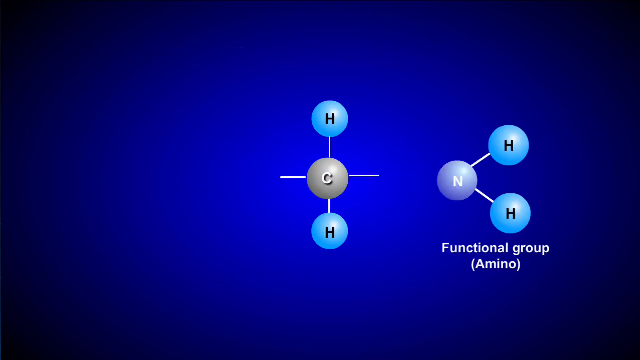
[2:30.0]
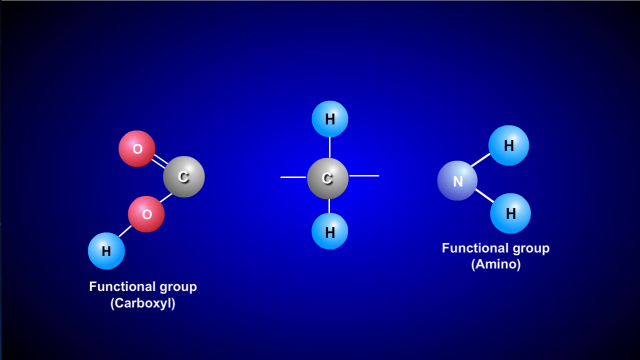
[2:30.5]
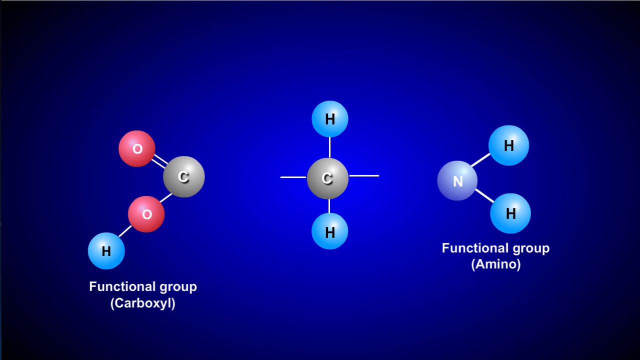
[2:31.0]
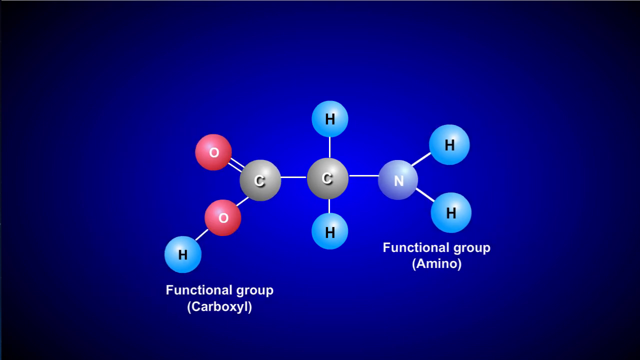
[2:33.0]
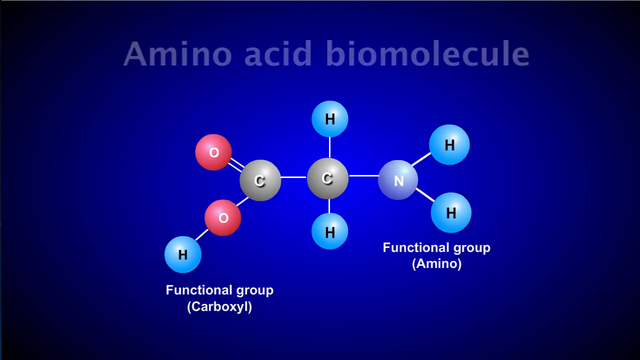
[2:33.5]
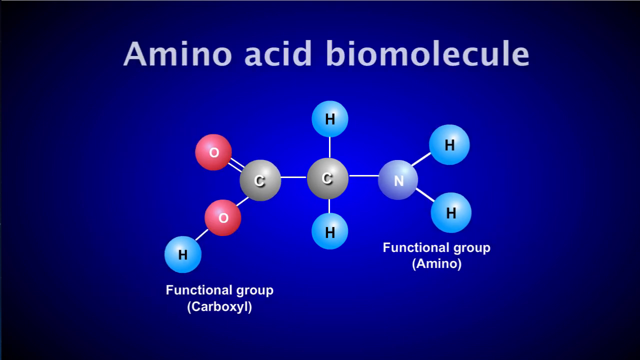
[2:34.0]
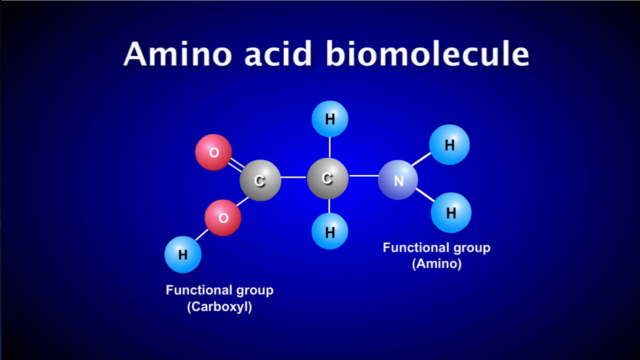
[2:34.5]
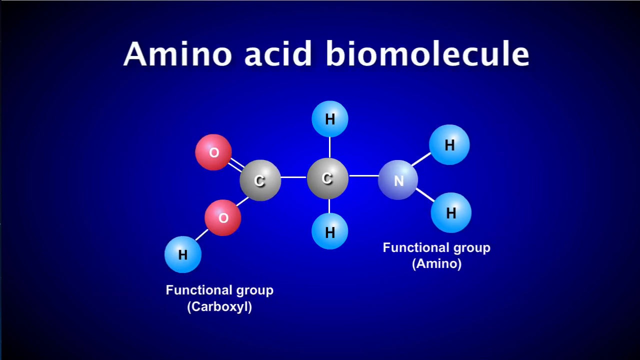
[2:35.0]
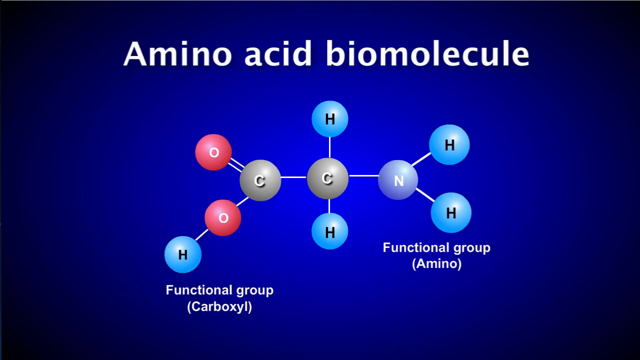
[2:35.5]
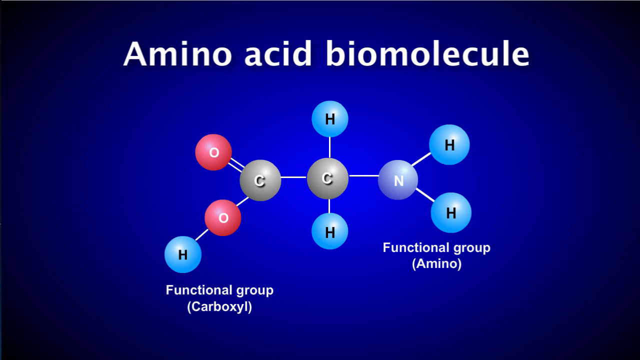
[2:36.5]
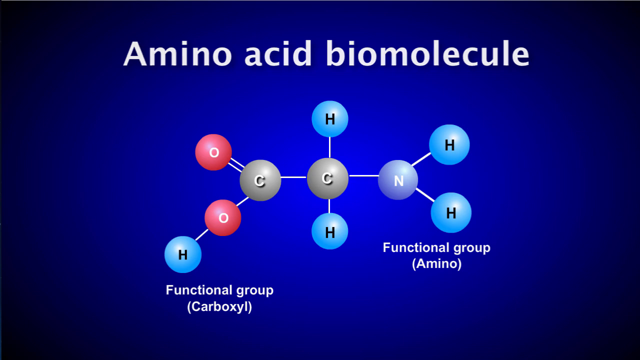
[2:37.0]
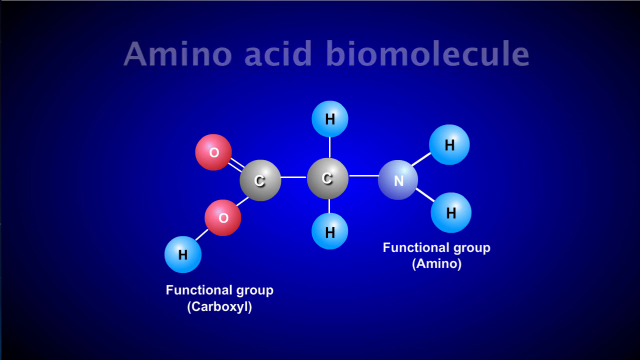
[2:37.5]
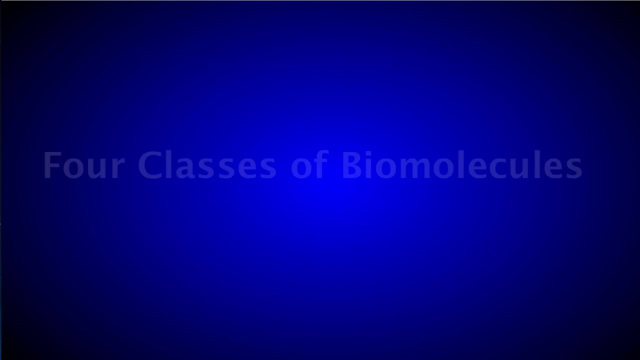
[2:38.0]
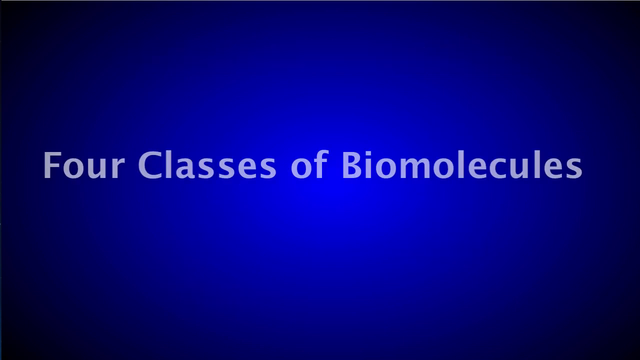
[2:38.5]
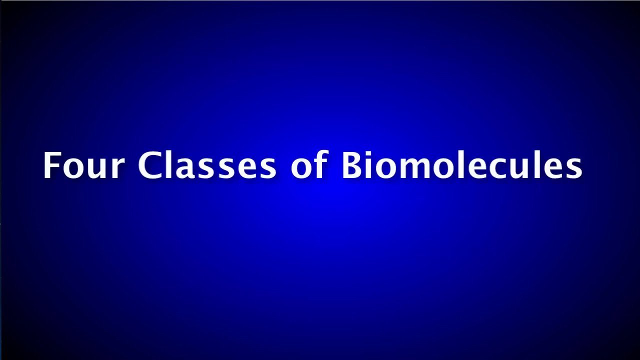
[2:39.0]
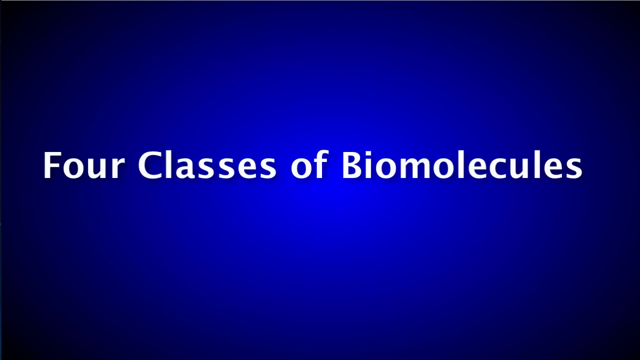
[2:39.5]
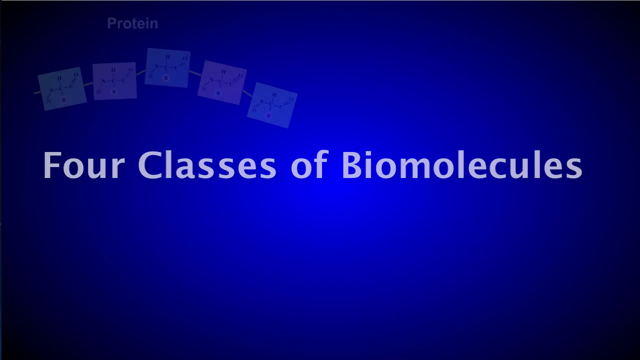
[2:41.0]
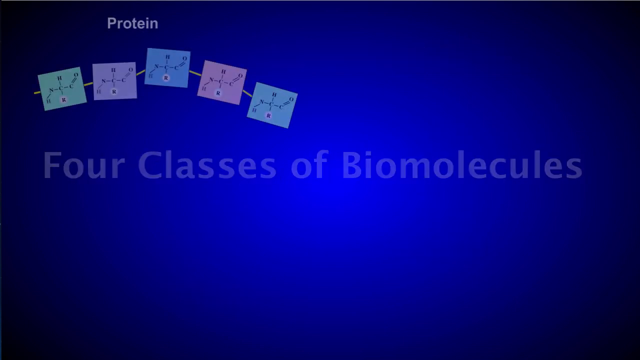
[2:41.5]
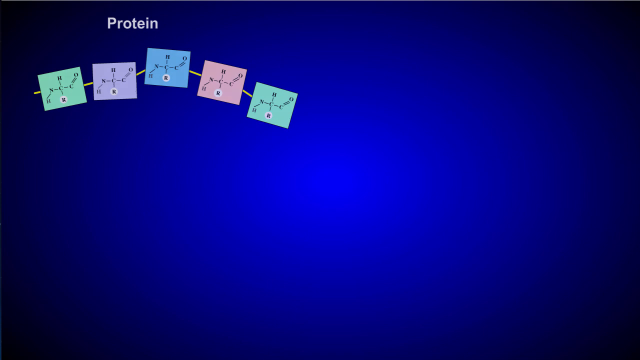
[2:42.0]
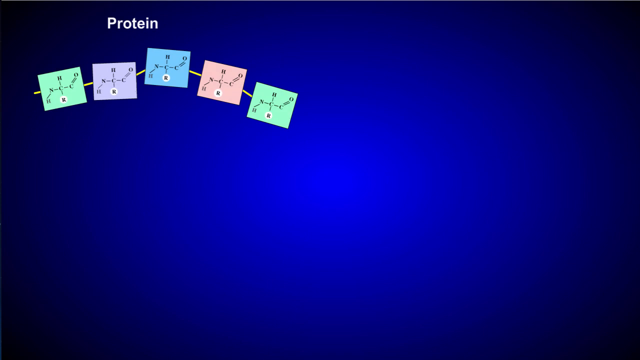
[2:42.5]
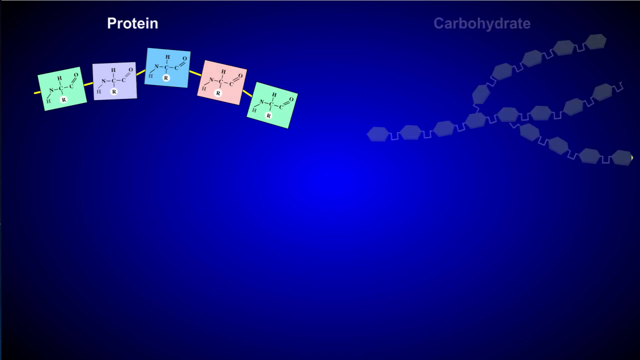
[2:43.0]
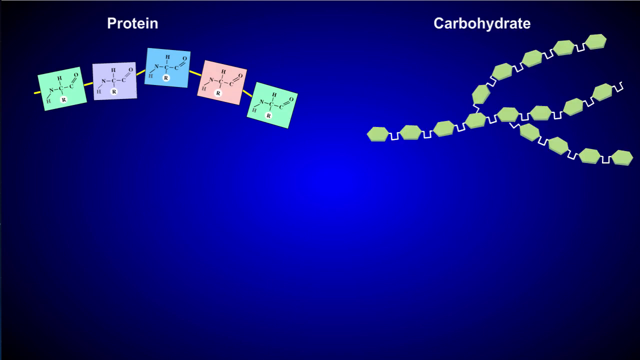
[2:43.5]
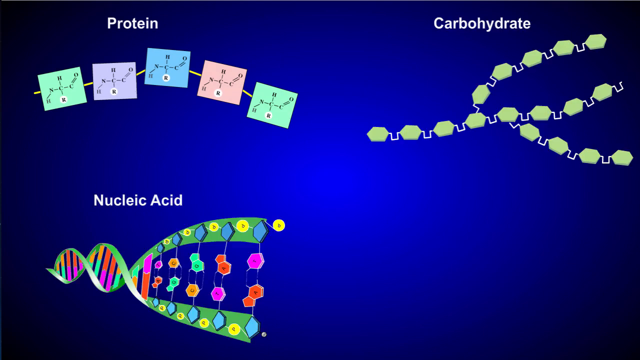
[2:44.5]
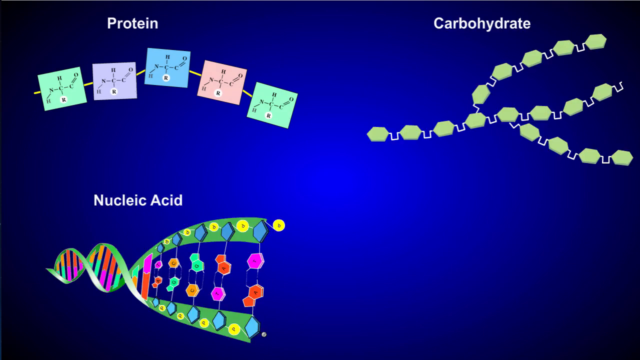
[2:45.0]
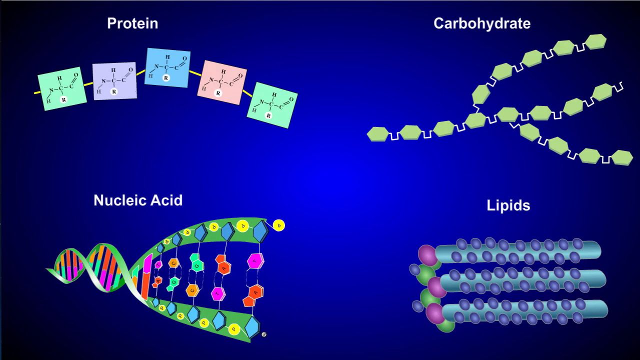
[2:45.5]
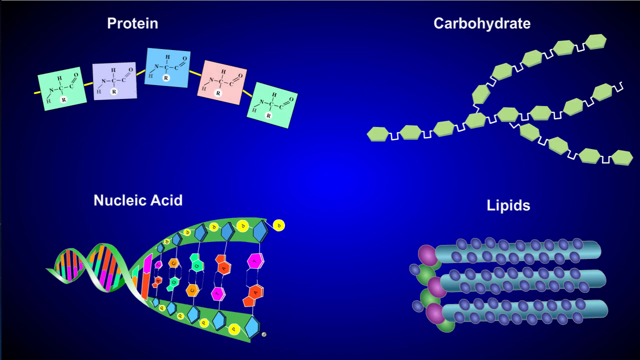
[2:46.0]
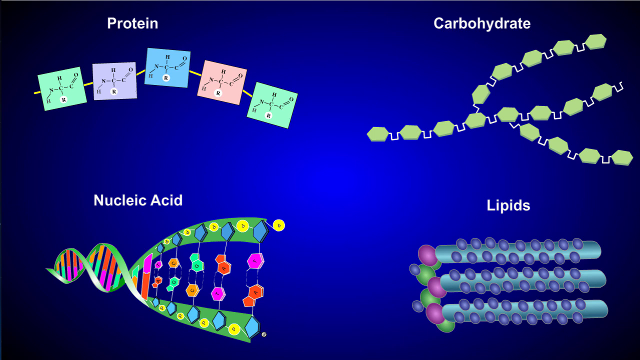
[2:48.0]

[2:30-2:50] A functional carboxyl group and an amino group interact with what appears to be another molecule. Text reads "four classes of biomolecules": proteins, carbohydrates, nucleic acids and lipids. The molecules interact so that a new molecule is formed.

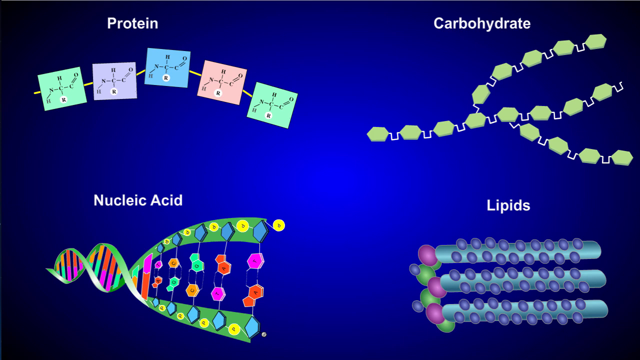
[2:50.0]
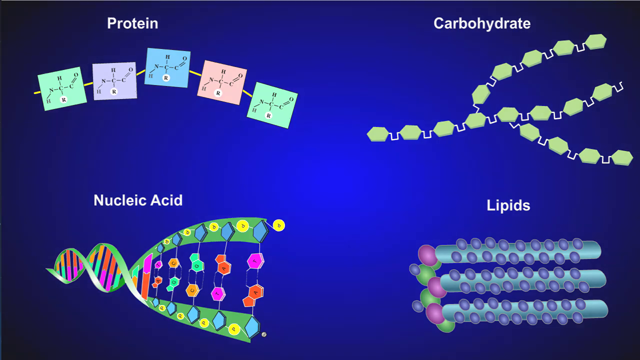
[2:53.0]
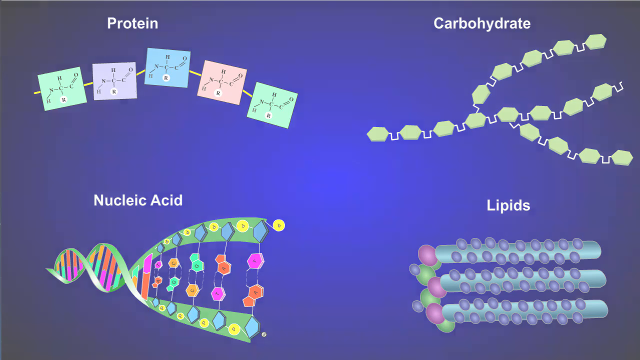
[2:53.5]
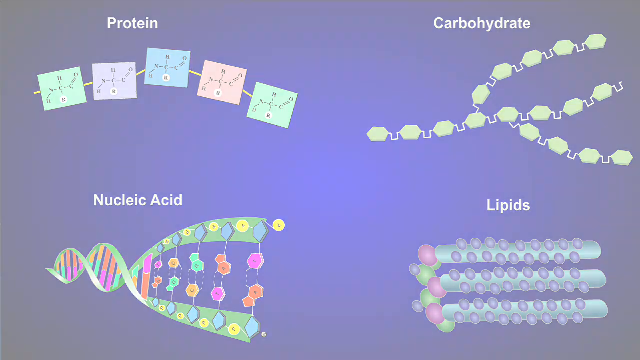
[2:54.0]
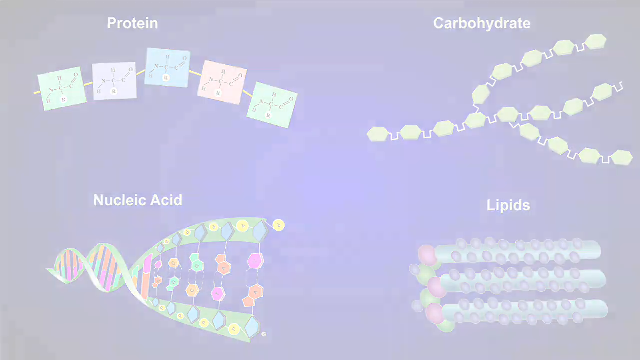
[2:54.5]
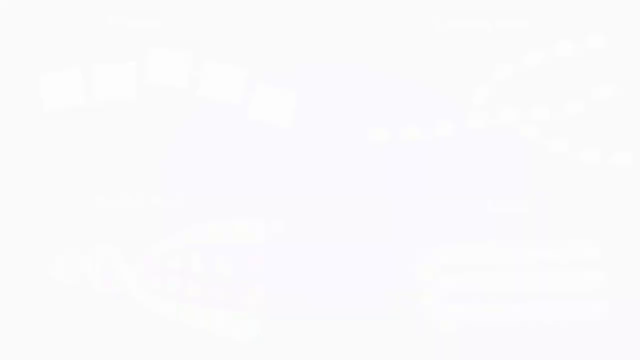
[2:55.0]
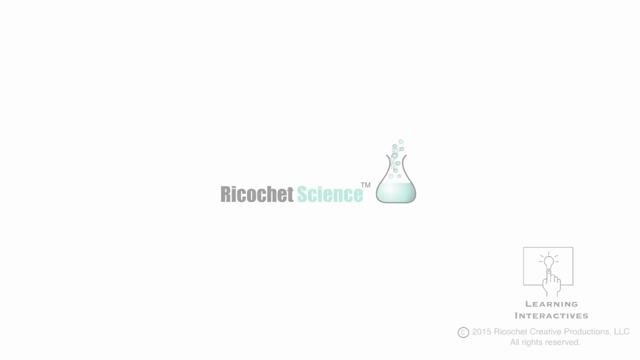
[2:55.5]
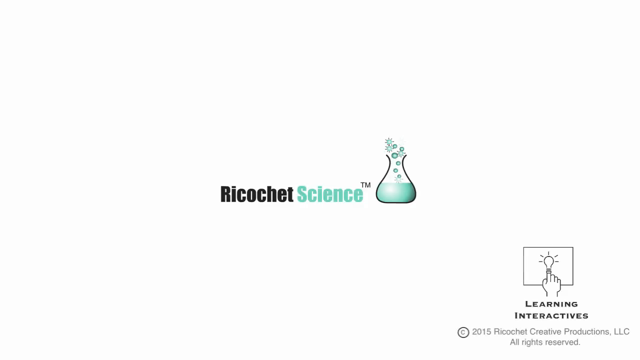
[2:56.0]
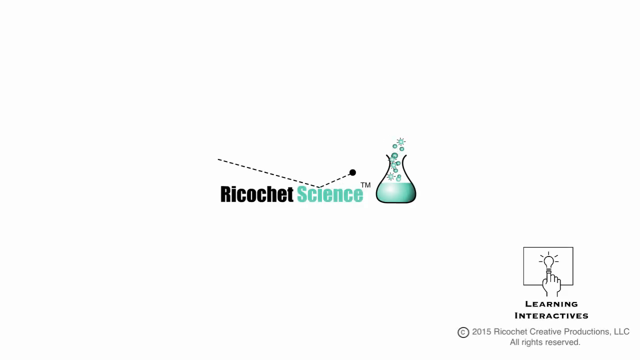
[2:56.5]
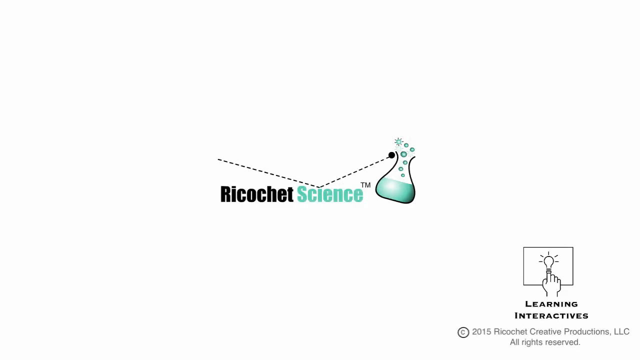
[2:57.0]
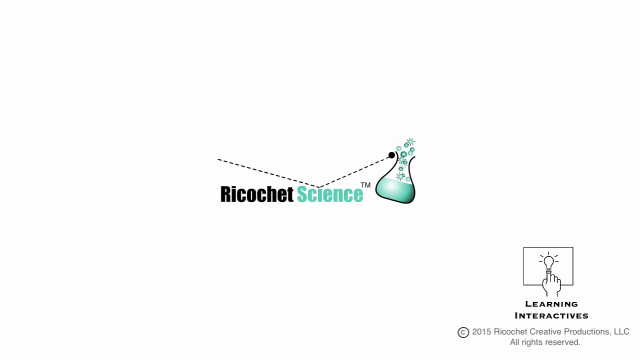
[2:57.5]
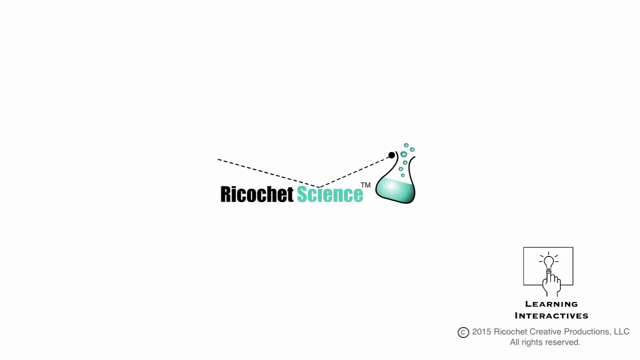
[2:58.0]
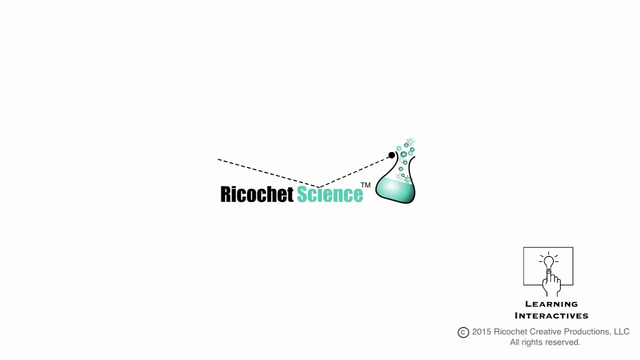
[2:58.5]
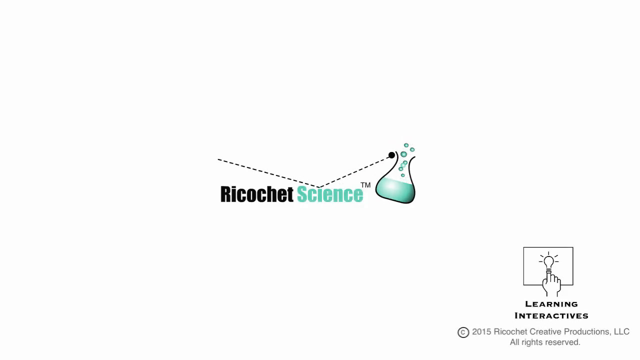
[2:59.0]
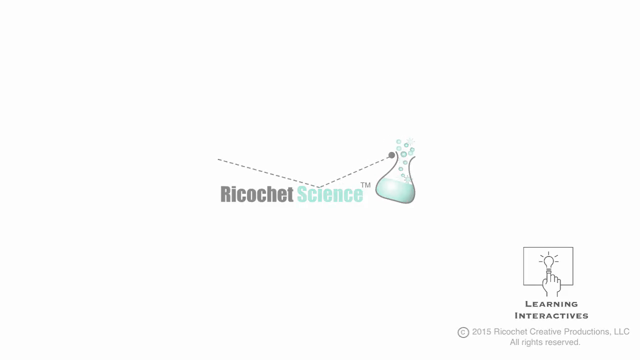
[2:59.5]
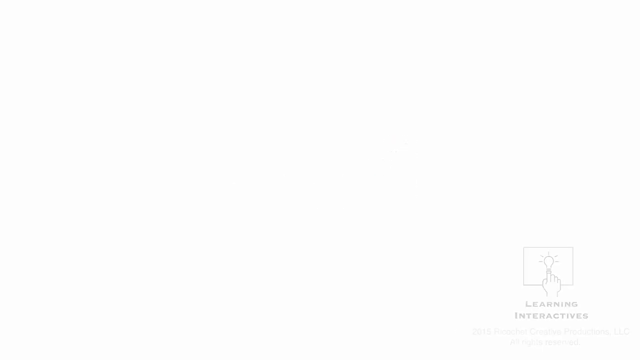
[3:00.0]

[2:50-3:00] Proteins, carbohydrates, nucleic acids and lipids are shown, each in its respective corner of the scene, showing what these molecules look like and how they are structured.